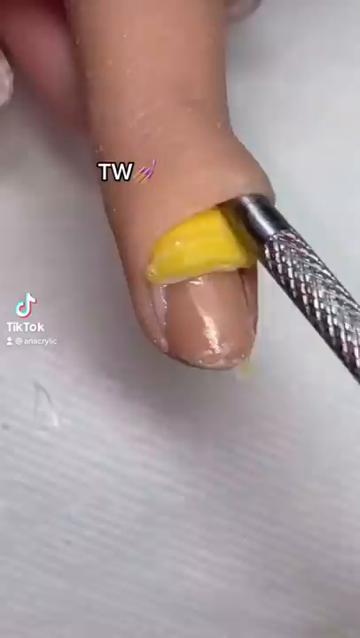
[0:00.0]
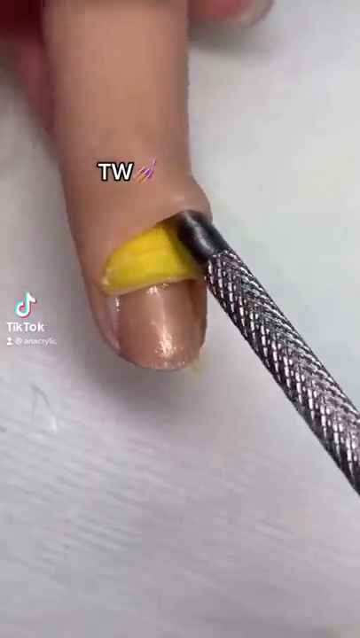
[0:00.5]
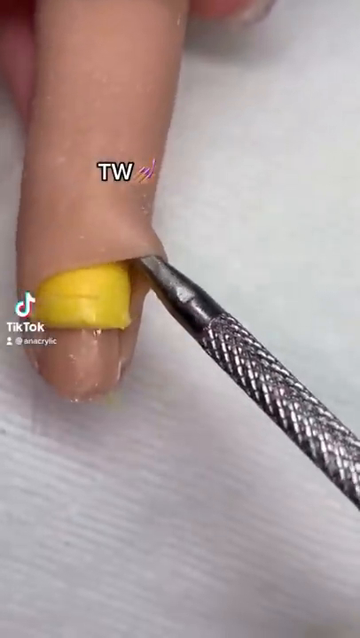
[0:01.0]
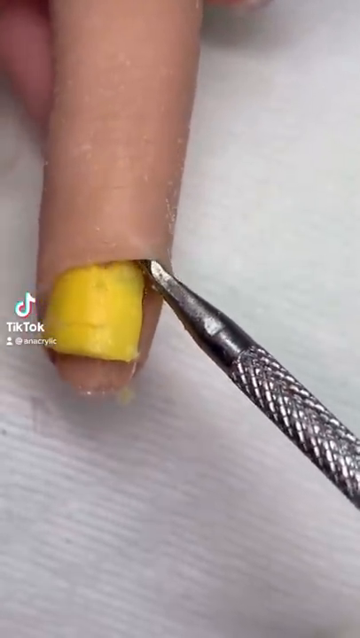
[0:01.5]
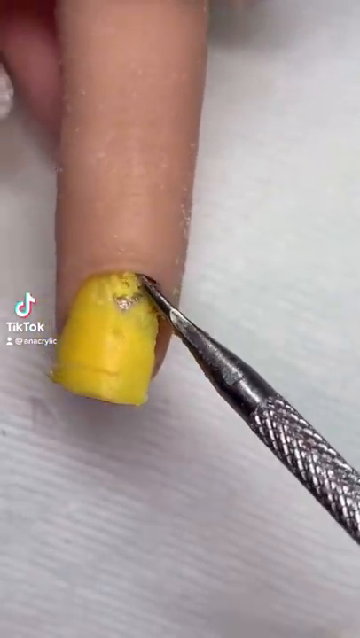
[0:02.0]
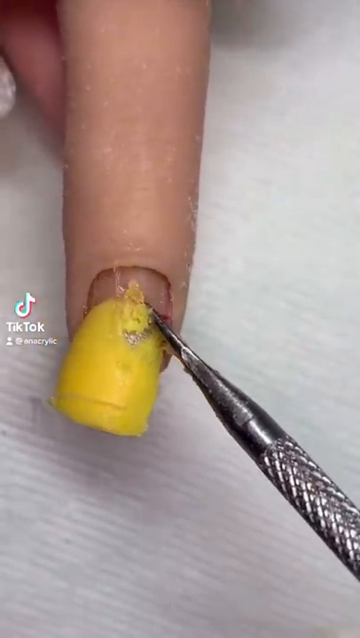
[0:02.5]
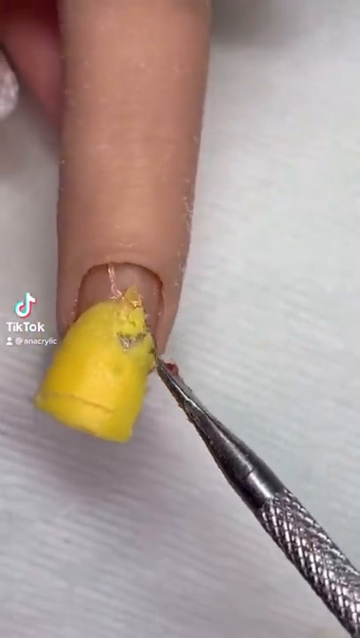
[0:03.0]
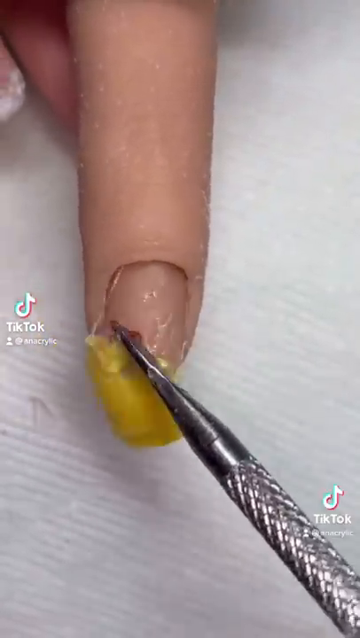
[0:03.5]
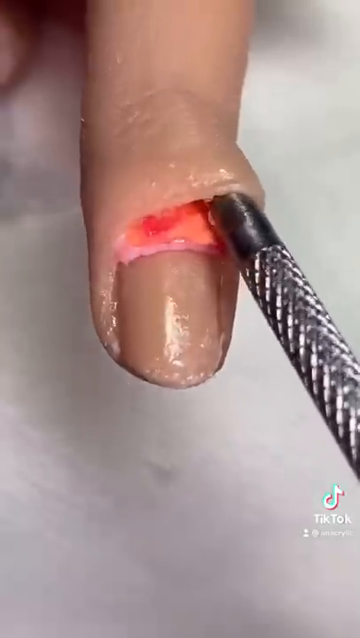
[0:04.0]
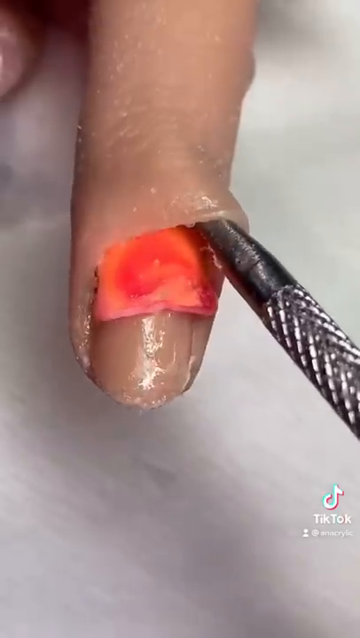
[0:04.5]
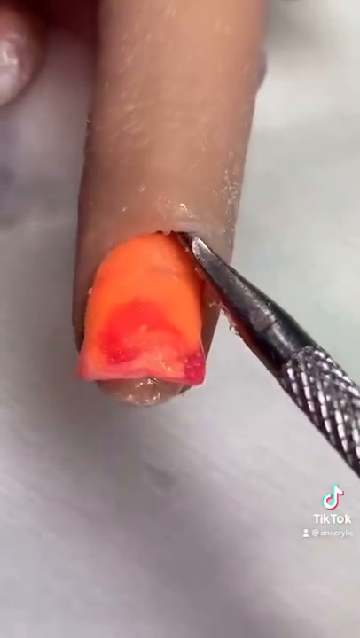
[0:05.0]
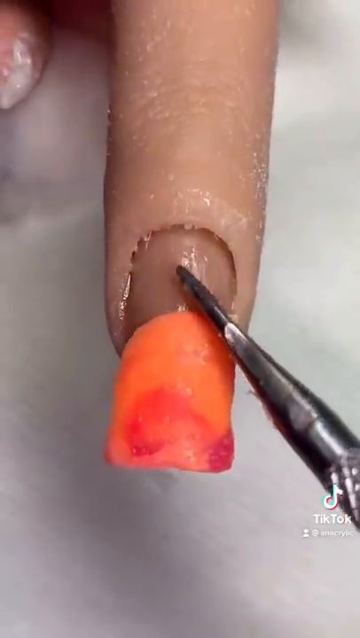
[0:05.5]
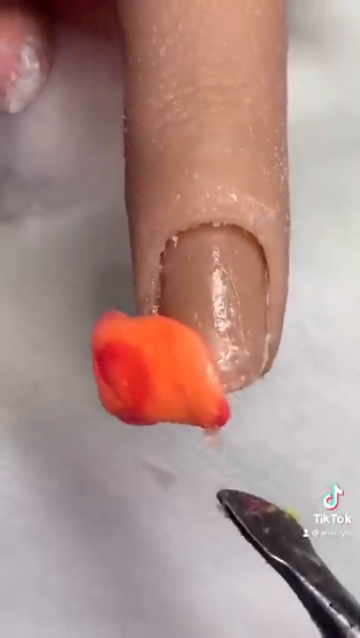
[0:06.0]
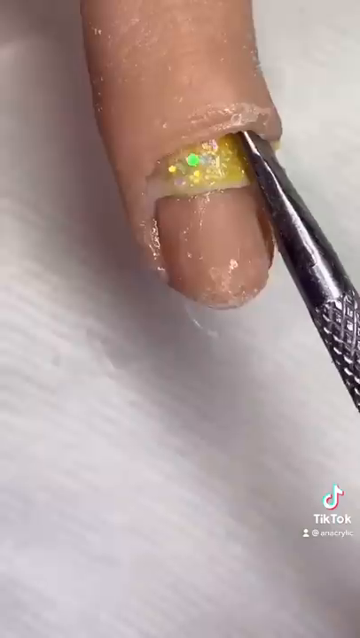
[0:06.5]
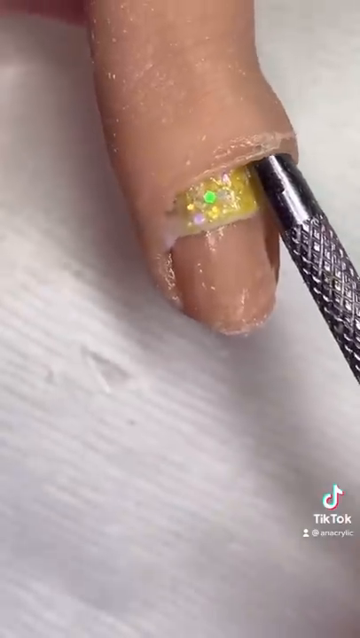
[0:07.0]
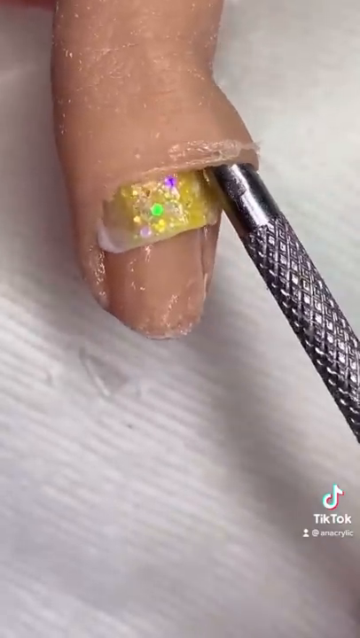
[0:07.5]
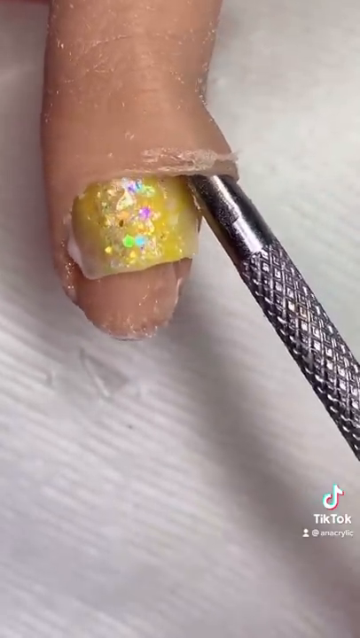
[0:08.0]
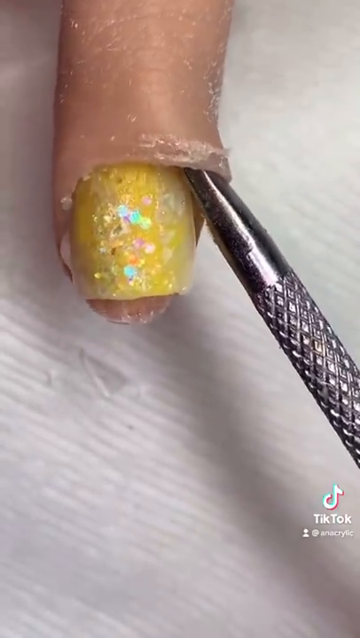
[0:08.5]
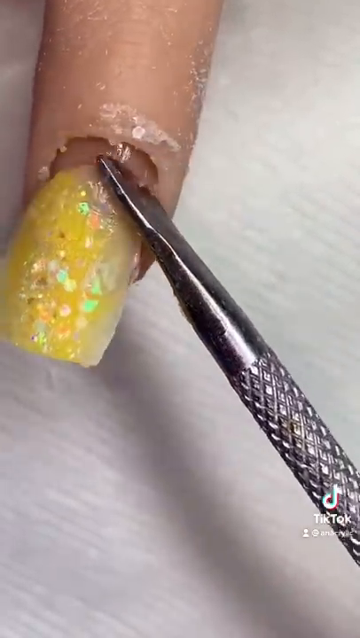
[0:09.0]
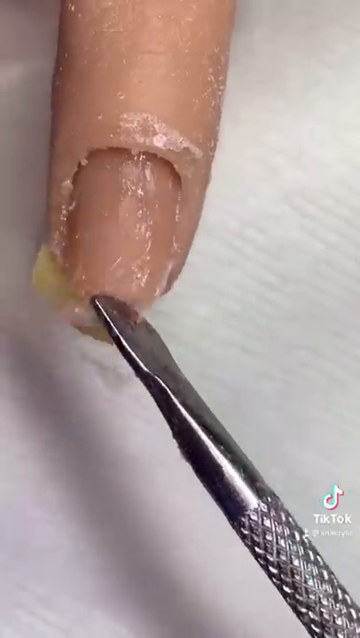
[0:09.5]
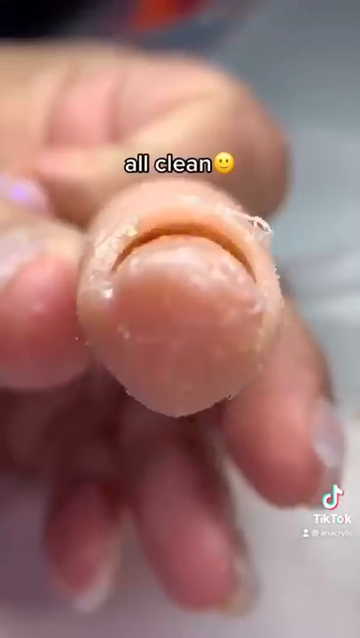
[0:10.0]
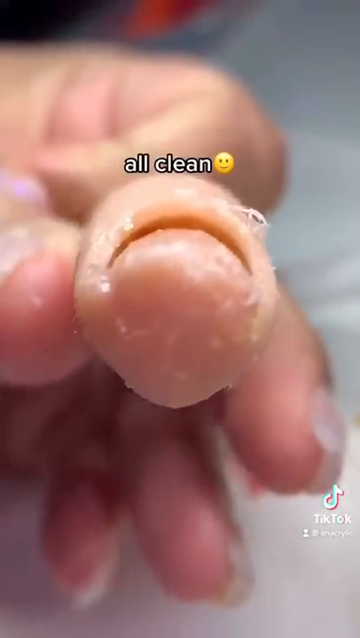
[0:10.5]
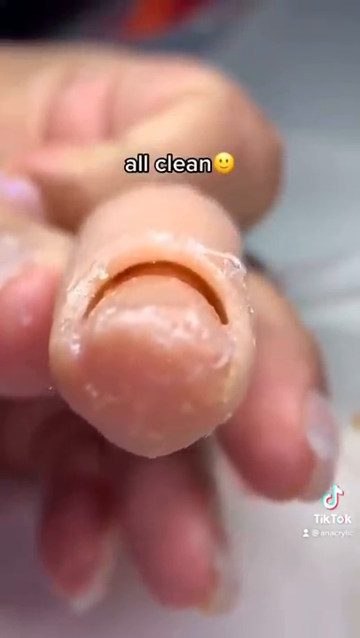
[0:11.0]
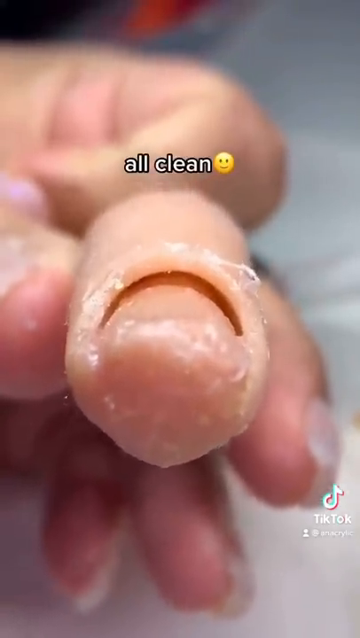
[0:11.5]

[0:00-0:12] Nail cleanings are being done, and a fake finger is used to show different tools kind of sliding up underneath the skin at the top of the nail. A kind of sharp tool reaches up under the skin and into the skin area, then pulls down, pulling repeatedly until part of the fingernail pops out. Some of the fingernails are yellow with speckles, and some are orange; an orange and reddish color is visible as the nail comes down. There is glitter on some of the fingers. The tool is kind of pulling and helping the fingernail come out from the finger. In the background, only a person's hands are visible, holding the fake finger; the person looks like it is probably a woman, with manicured fingernails. As the fingernails slide out, a little bit of glue and a little bit of shine come along with them.